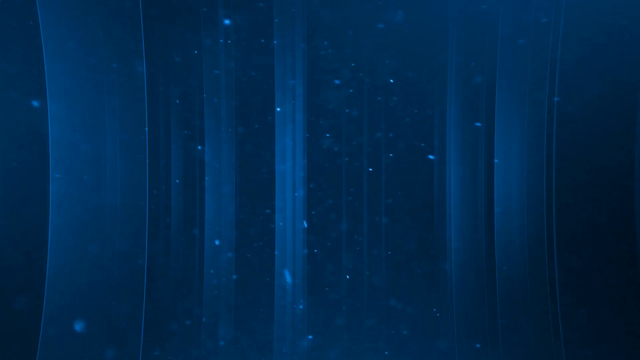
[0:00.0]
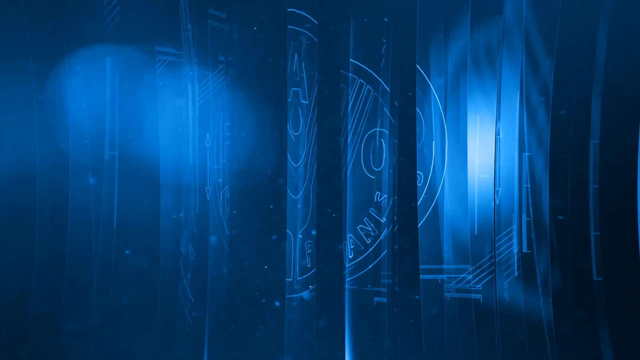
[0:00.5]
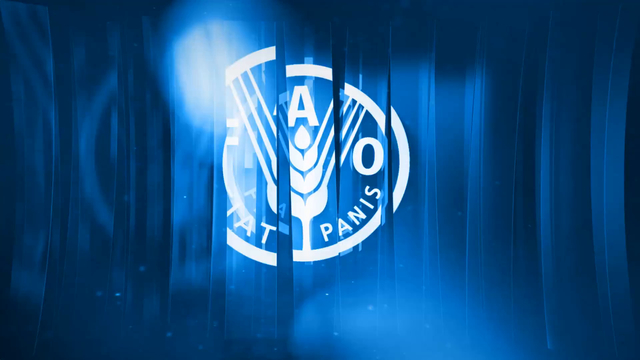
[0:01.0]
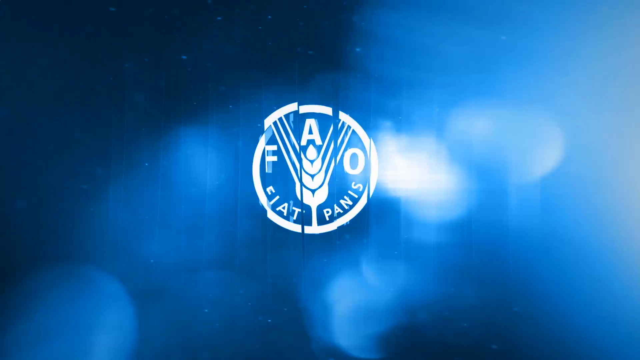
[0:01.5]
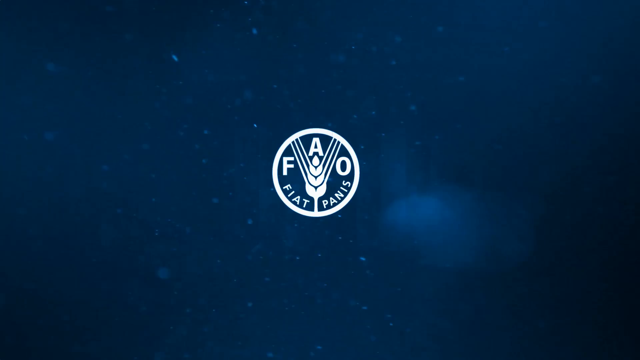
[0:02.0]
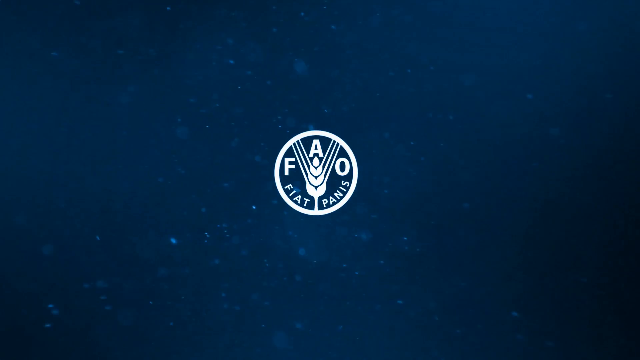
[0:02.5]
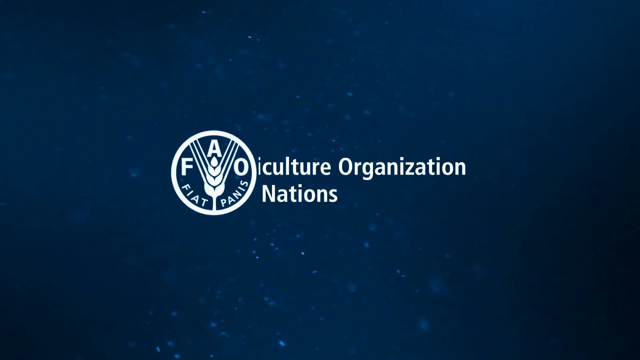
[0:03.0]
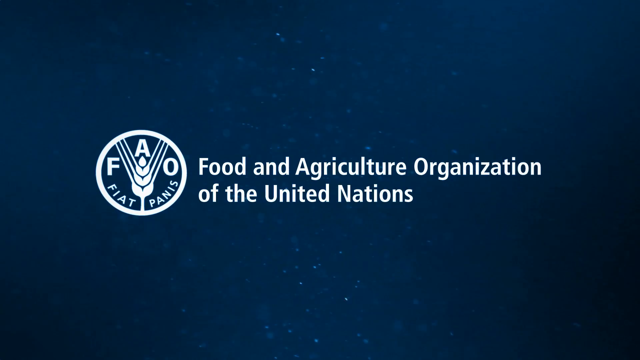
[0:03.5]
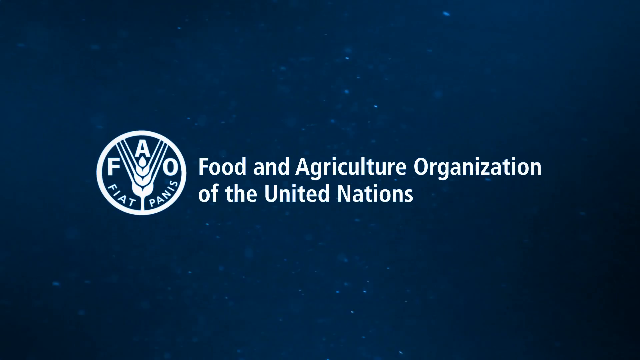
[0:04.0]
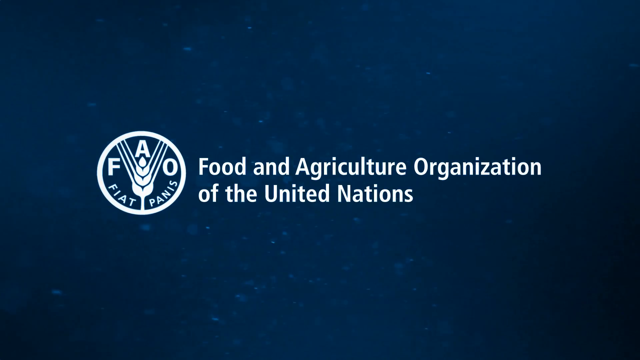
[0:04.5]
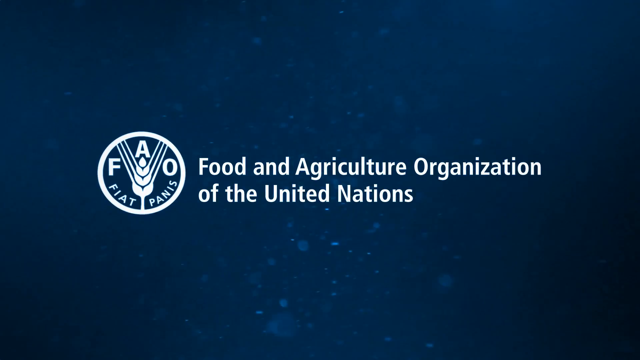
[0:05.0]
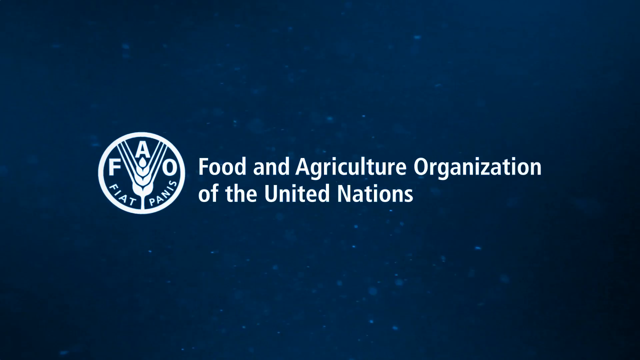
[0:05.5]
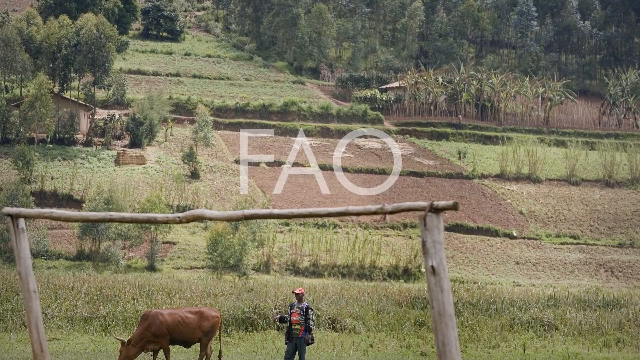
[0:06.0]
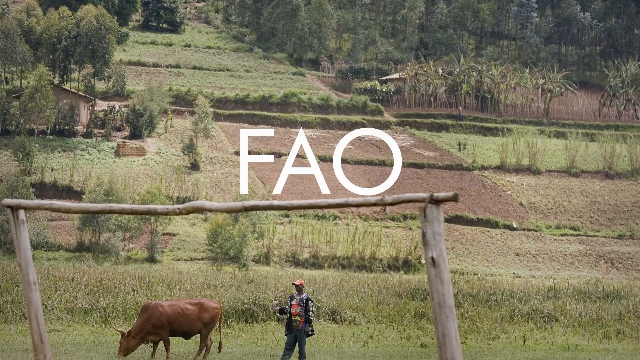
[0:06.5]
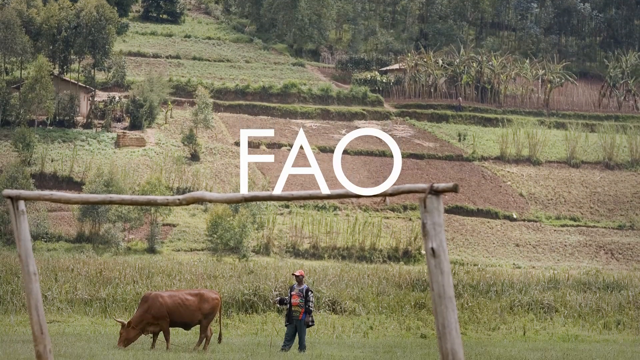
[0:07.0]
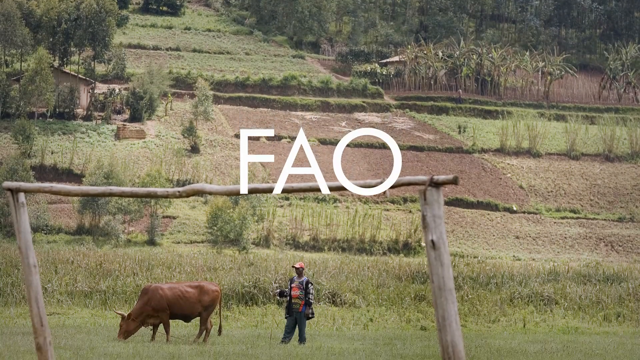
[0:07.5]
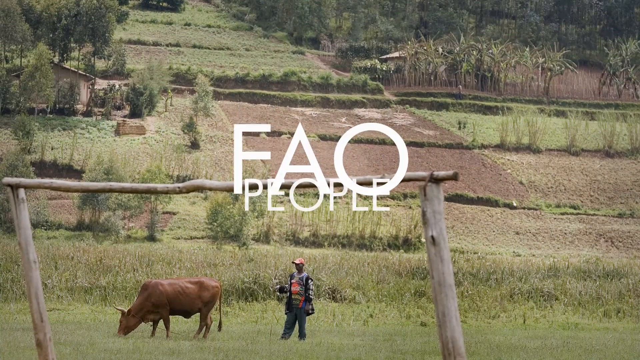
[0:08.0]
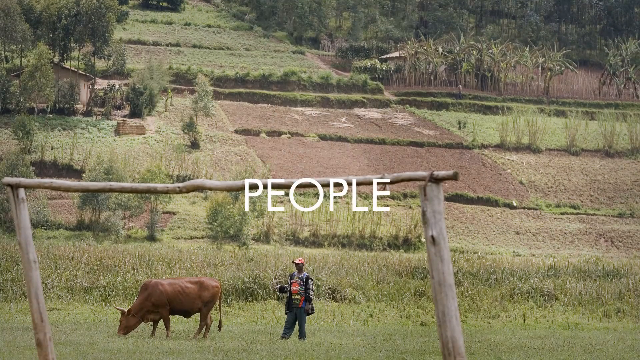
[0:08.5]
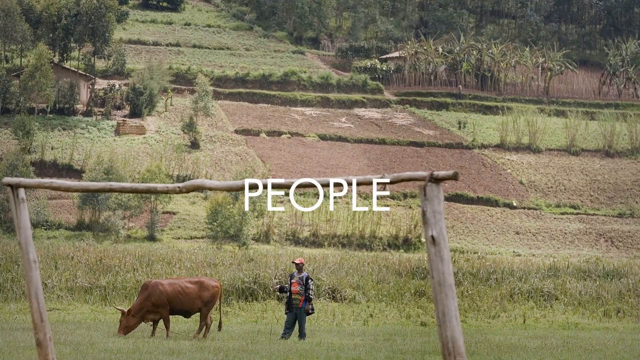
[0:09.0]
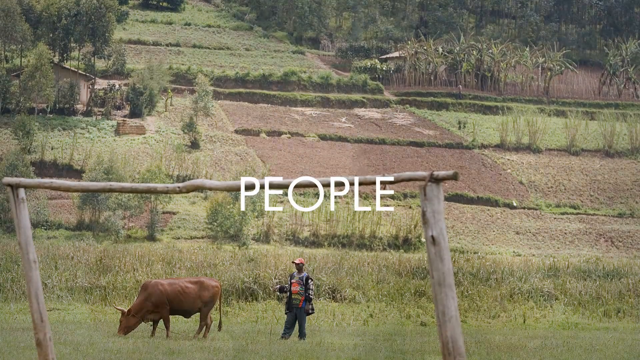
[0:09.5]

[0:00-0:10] The video opens with the FAO emblem, a barley wheat with the letters F-A-O surrounding it and text underneath. It then shows a farmer with a cow and a field in Africa, where African people are farming the land. The fields are green and the farming looks productive.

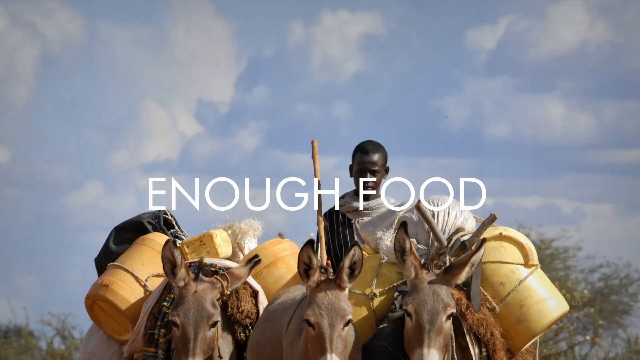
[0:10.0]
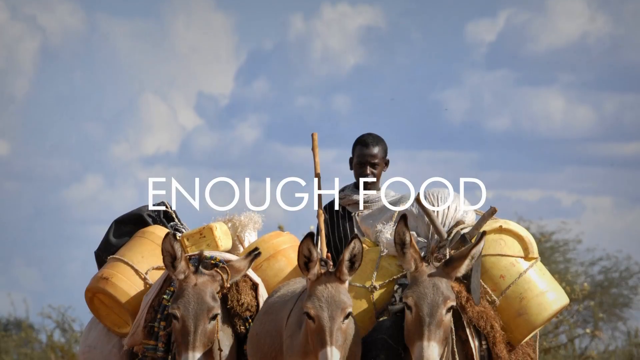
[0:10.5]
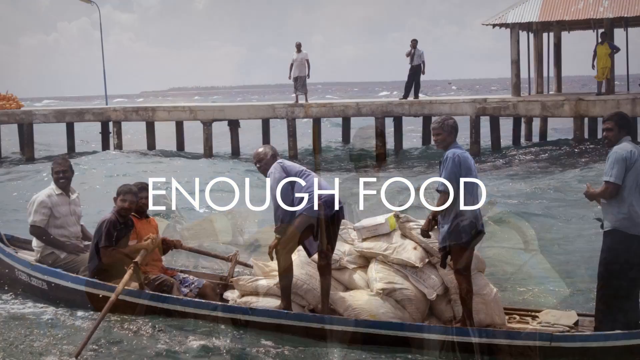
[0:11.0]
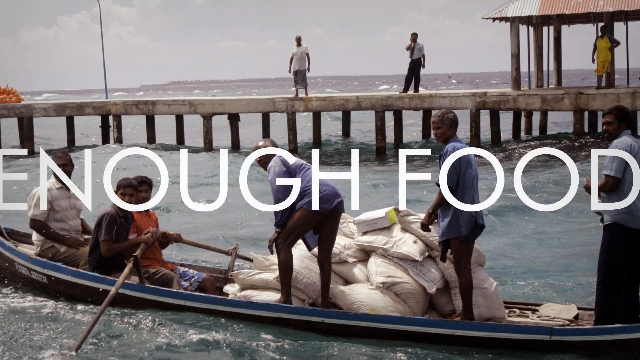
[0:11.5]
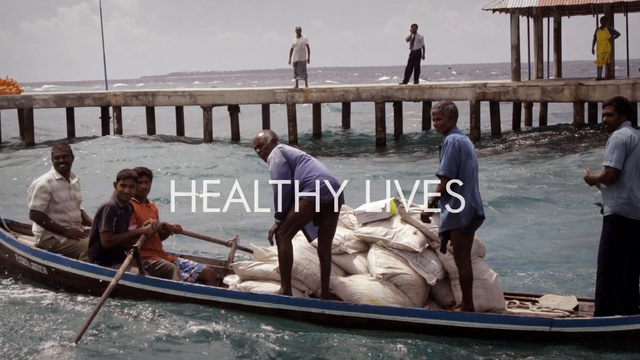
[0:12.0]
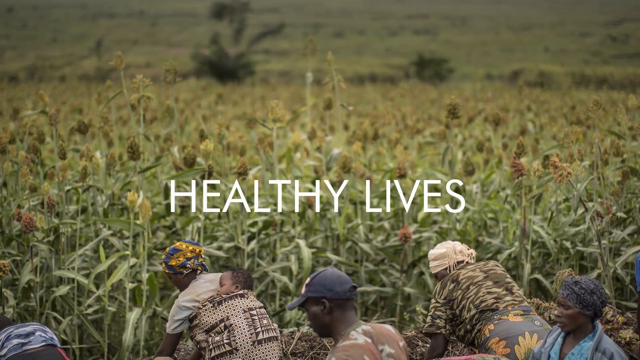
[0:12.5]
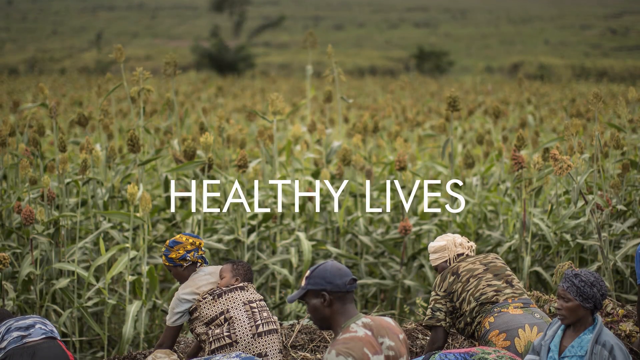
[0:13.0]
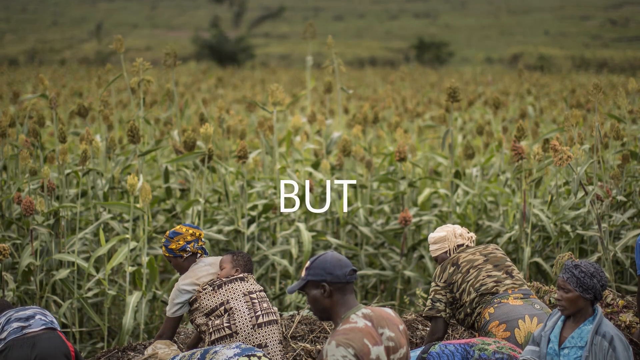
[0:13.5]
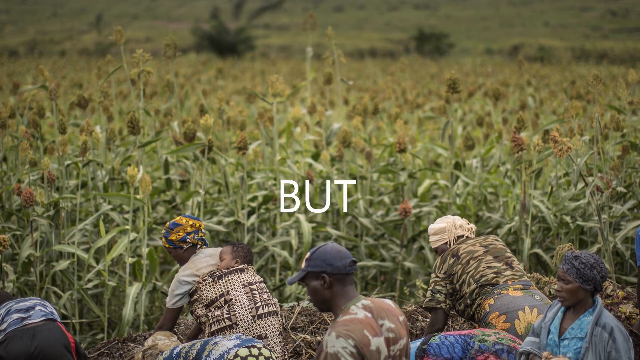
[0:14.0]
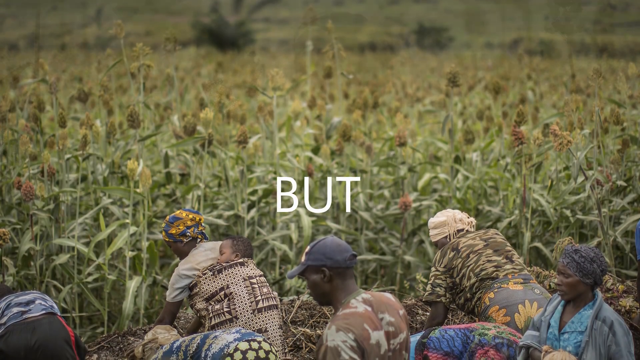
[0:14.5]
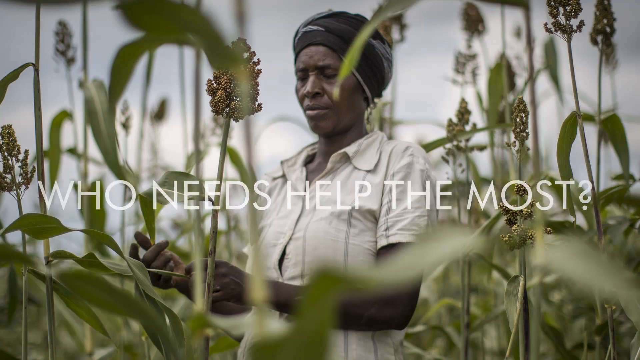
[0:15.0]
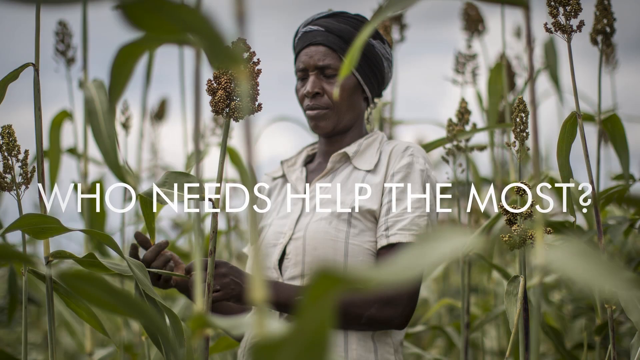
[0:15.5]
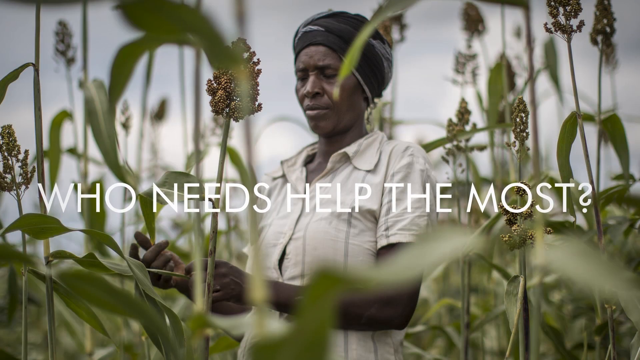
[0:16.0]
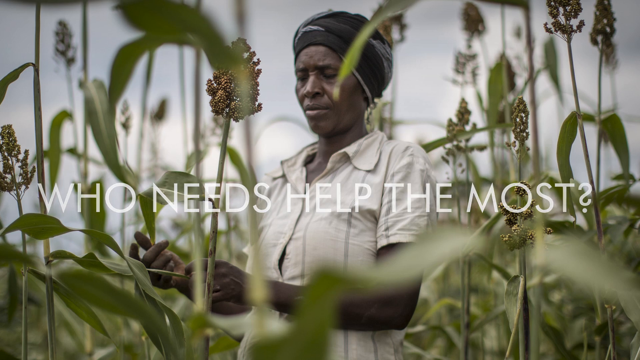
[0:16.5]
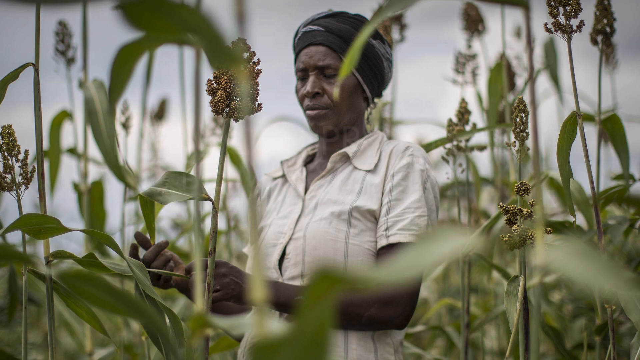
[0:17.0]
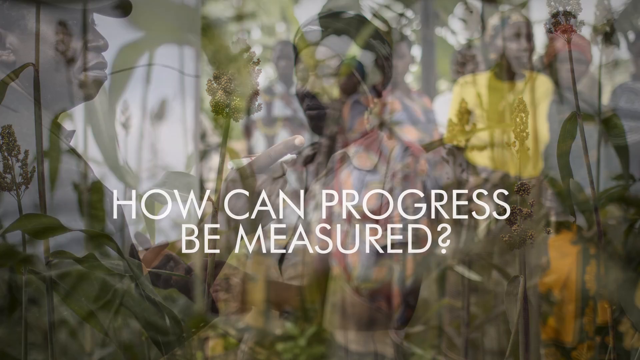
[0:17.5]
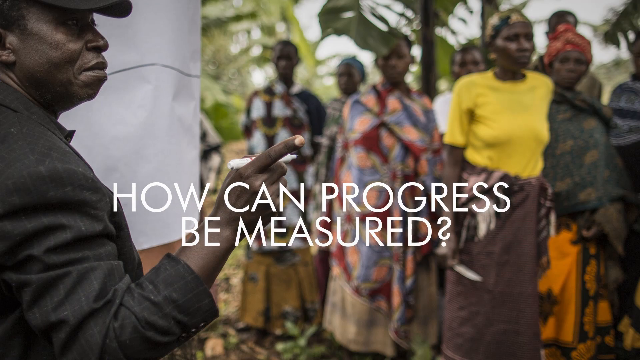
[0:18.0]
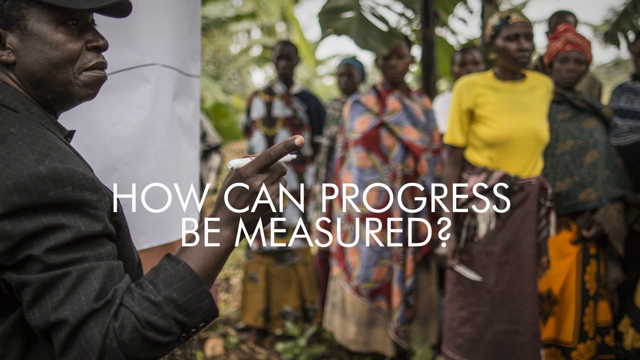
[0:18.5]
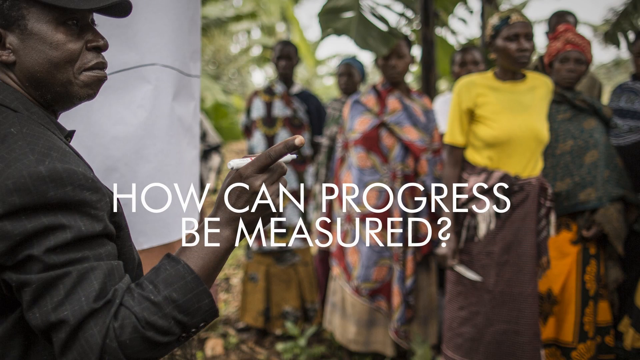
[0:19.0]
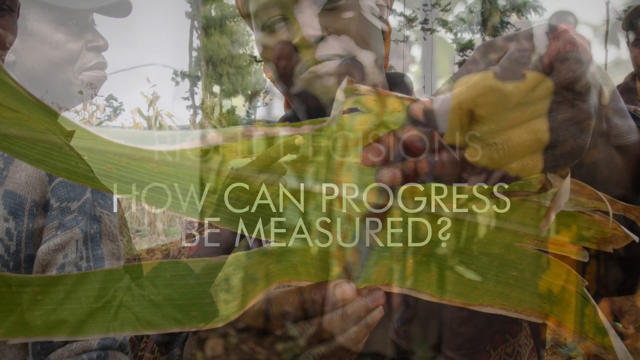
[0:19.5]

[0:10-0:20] Africans are shown farming, and some are in a boat fishing and sending supplies. The caption "enough food" appears in the center of the screen over a scene with 10 people: three on a deck overlooking the sea and four in a boat piled with food supplies, with two boys rowing the boat. Text then reads "healthy lives, but who needs help the most? How can progress be measured?" and "Right decisions." The video shows villagers farming the land and picking the barley, and then a man with a marker pen drawing on something white, showing the villagers how to farm.